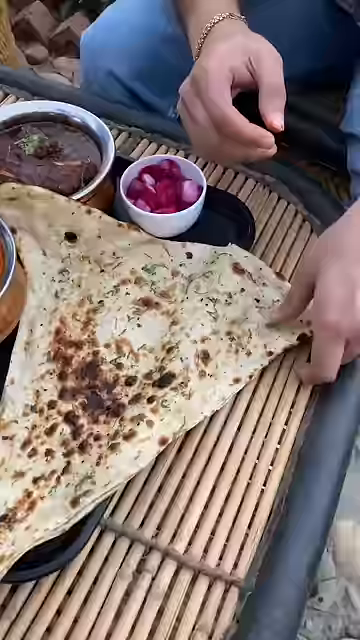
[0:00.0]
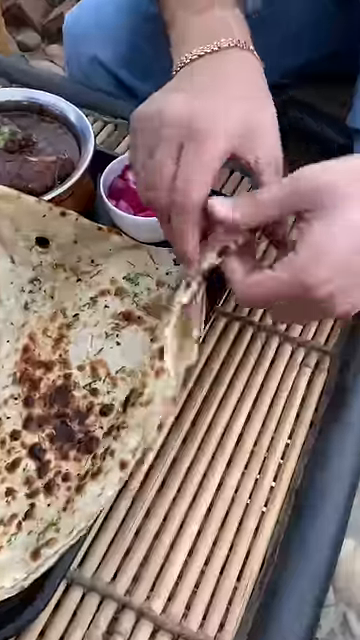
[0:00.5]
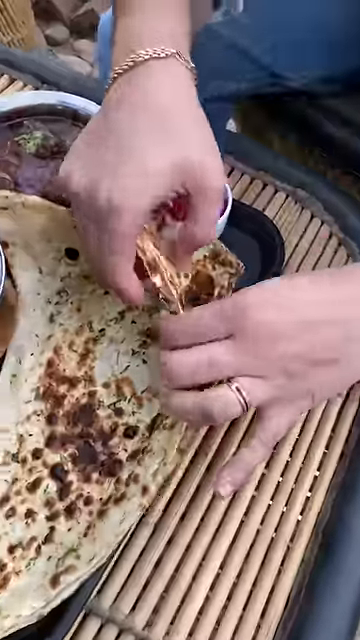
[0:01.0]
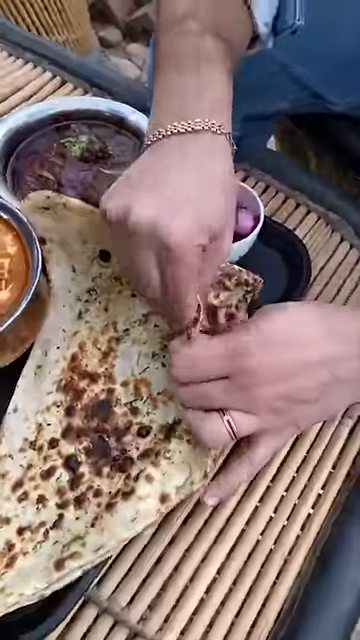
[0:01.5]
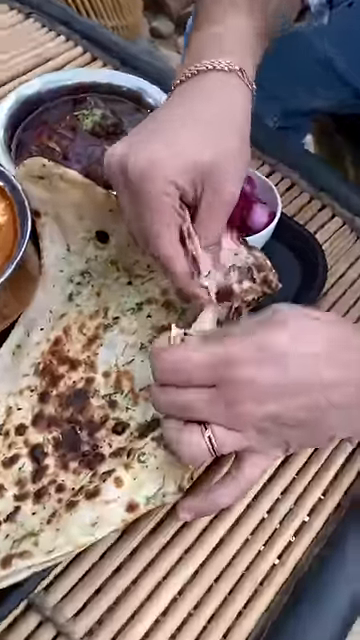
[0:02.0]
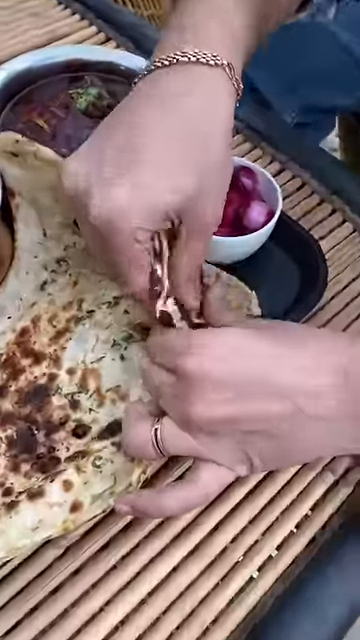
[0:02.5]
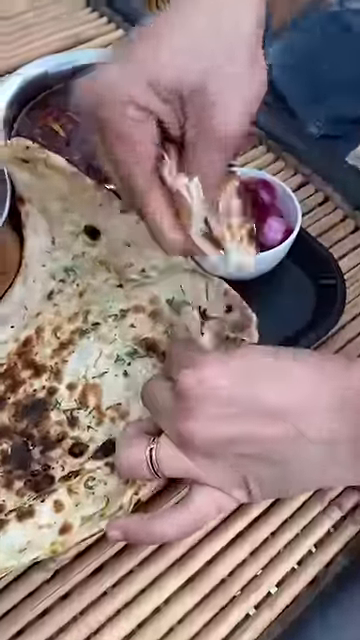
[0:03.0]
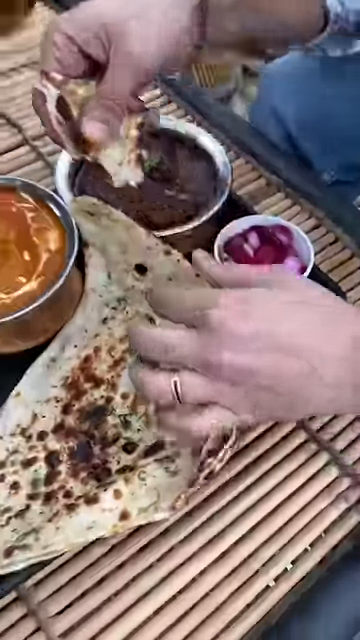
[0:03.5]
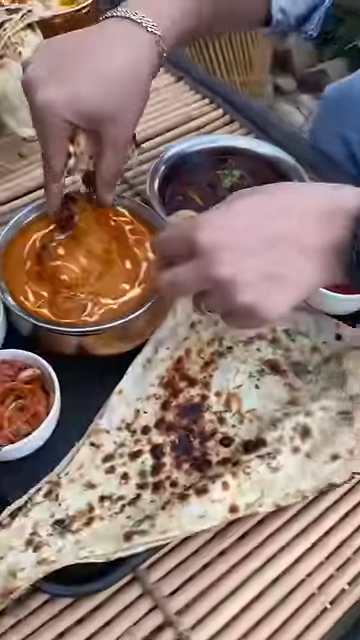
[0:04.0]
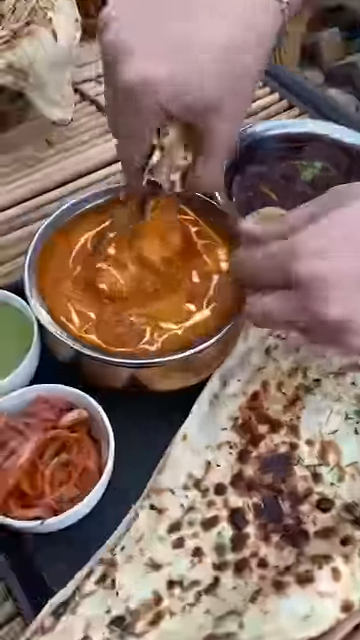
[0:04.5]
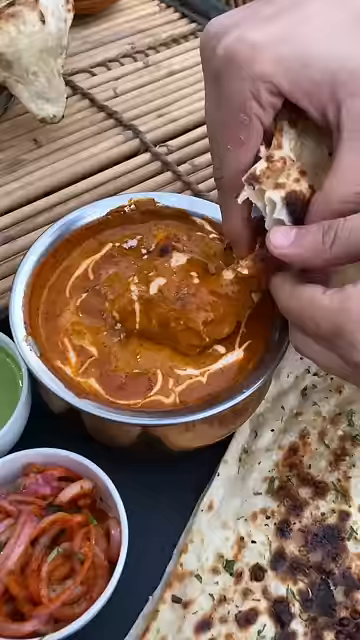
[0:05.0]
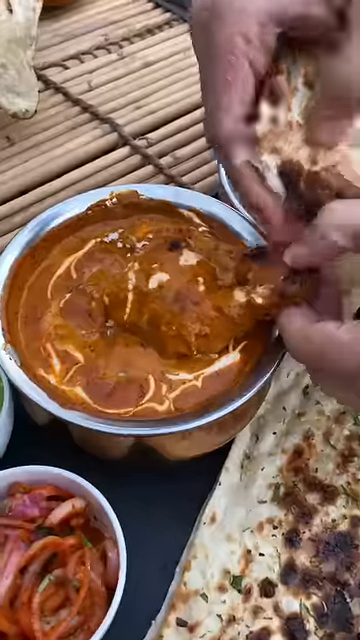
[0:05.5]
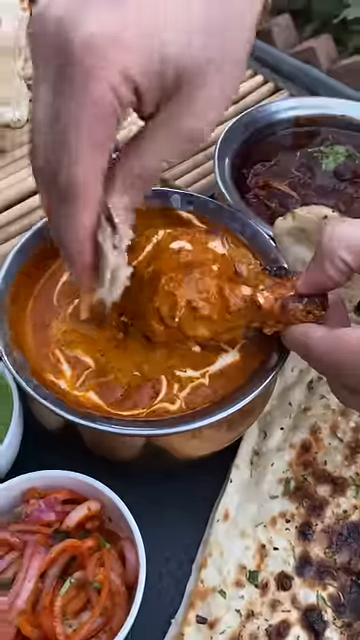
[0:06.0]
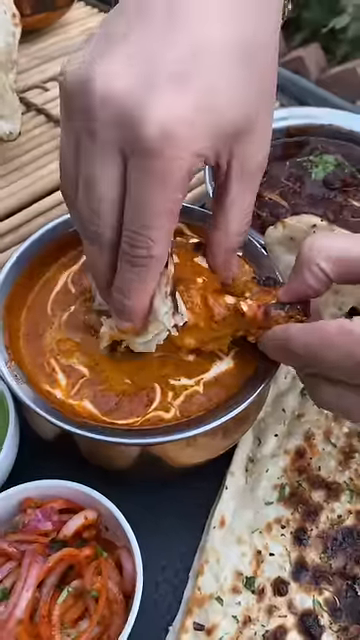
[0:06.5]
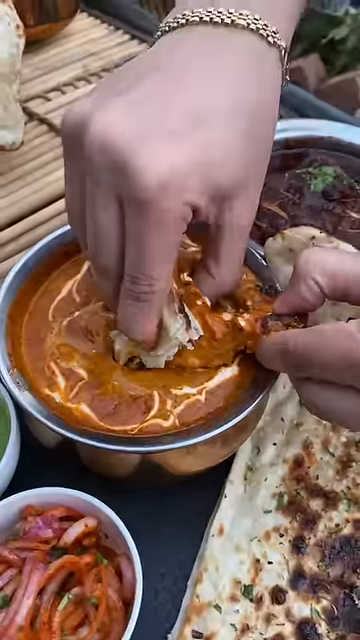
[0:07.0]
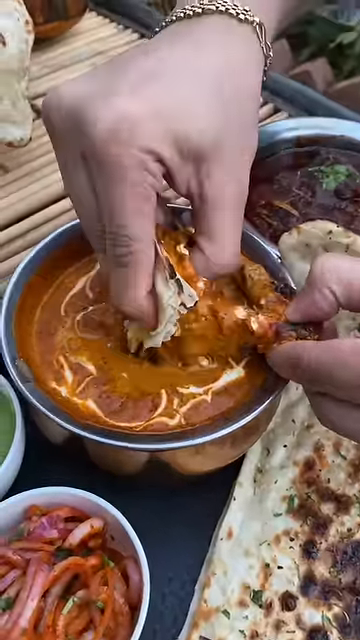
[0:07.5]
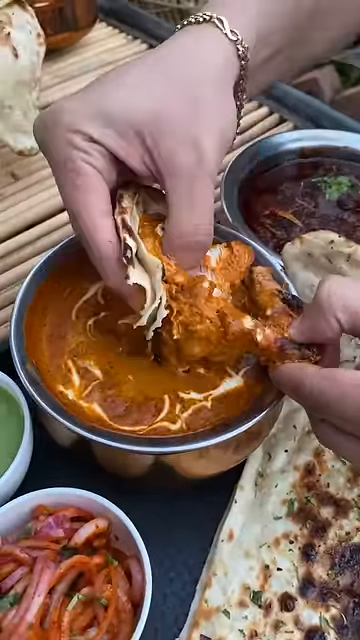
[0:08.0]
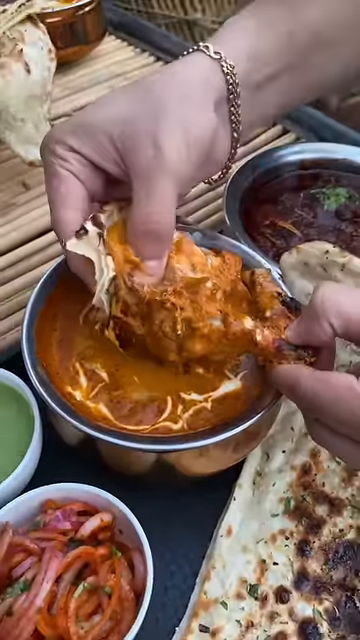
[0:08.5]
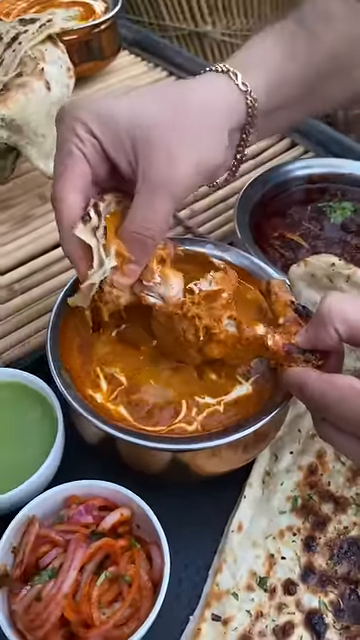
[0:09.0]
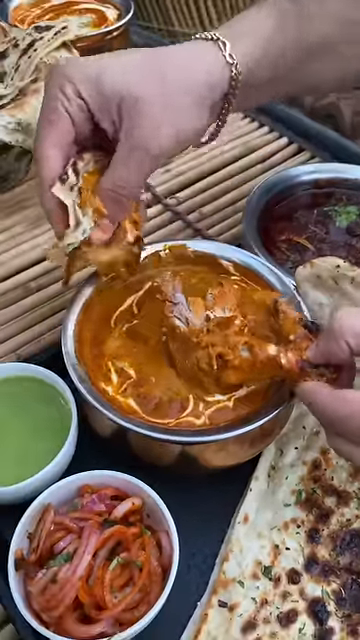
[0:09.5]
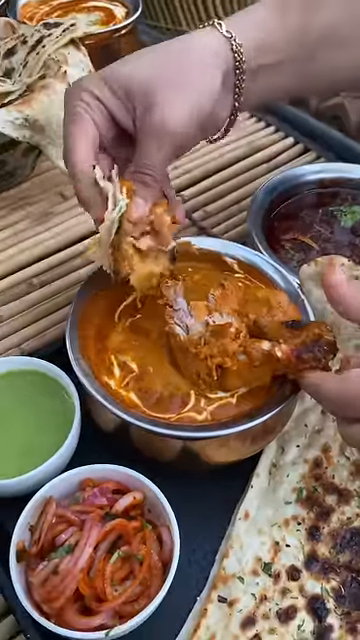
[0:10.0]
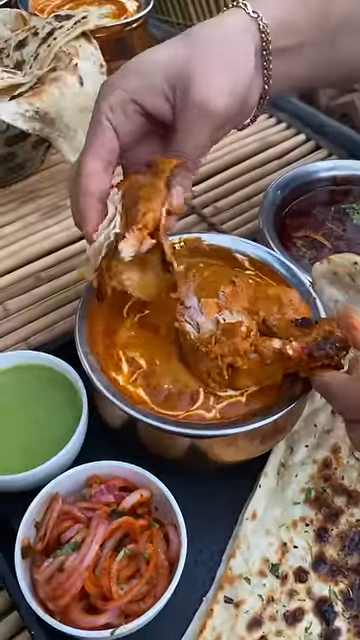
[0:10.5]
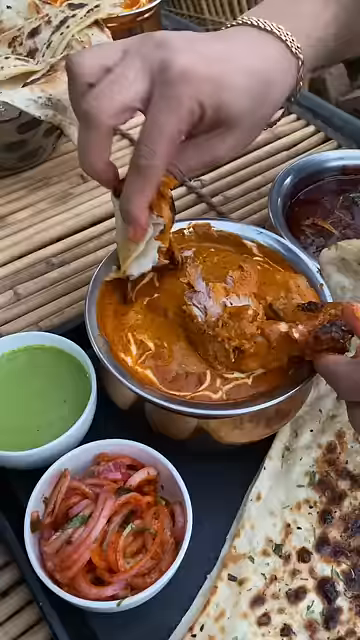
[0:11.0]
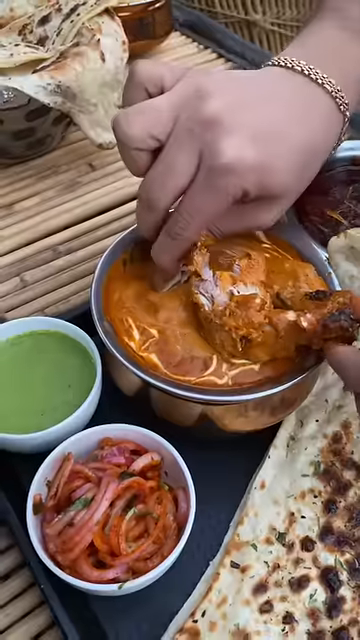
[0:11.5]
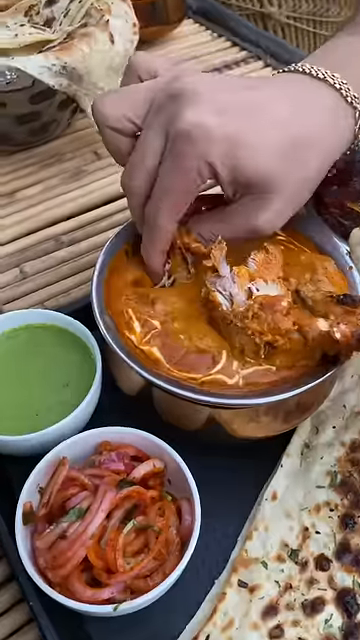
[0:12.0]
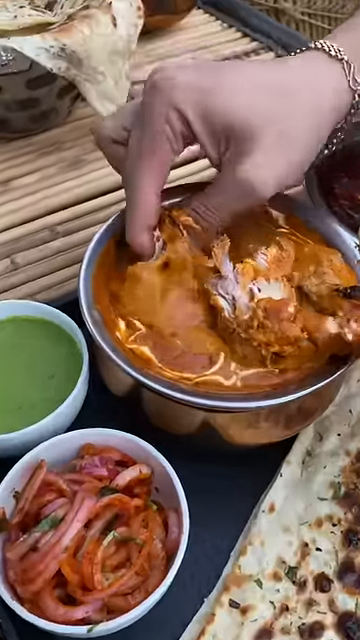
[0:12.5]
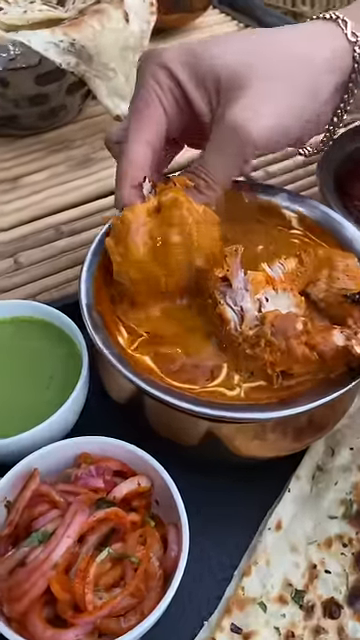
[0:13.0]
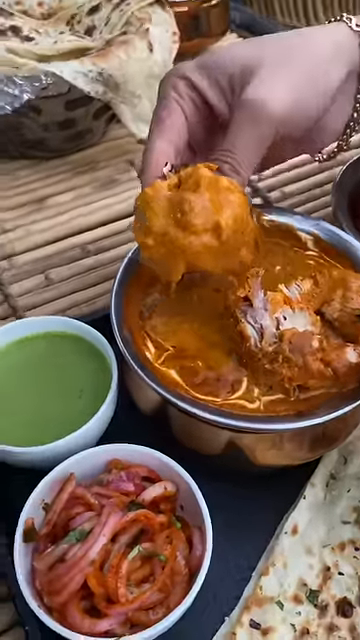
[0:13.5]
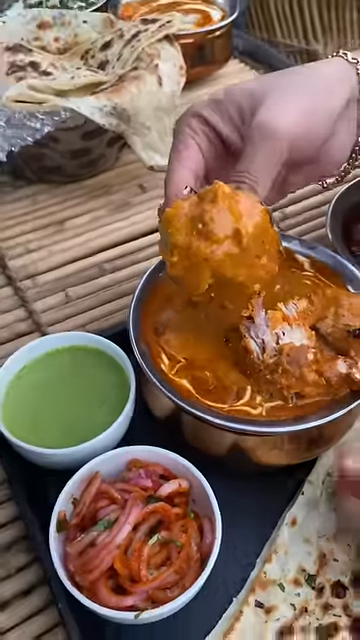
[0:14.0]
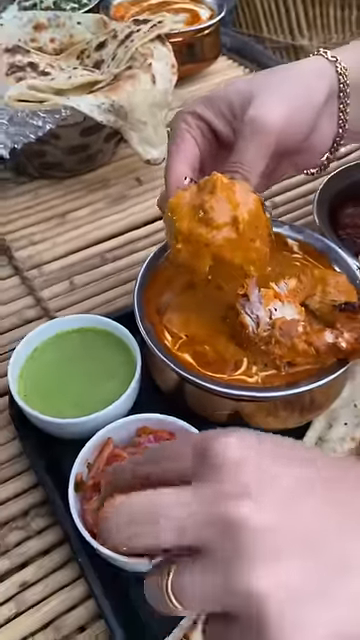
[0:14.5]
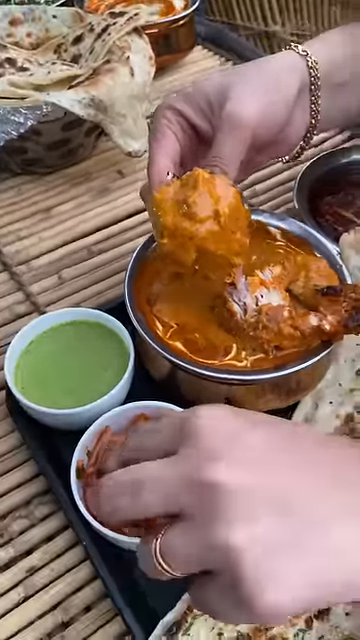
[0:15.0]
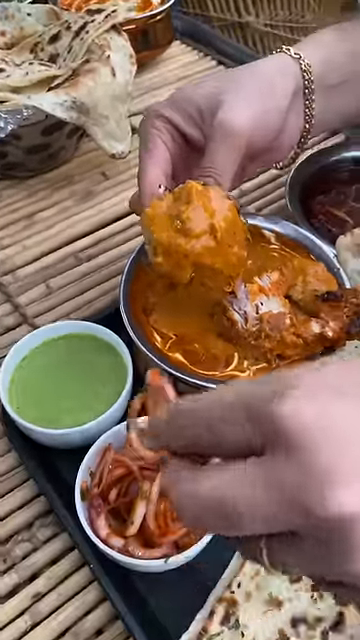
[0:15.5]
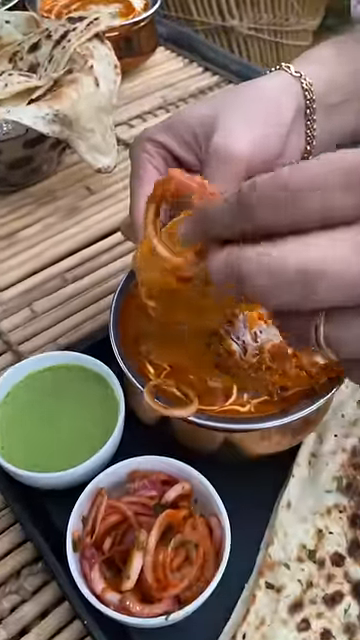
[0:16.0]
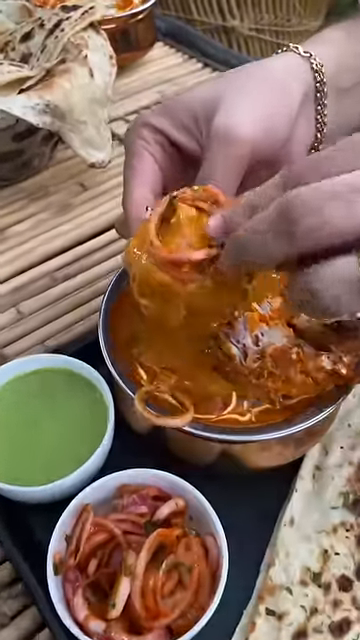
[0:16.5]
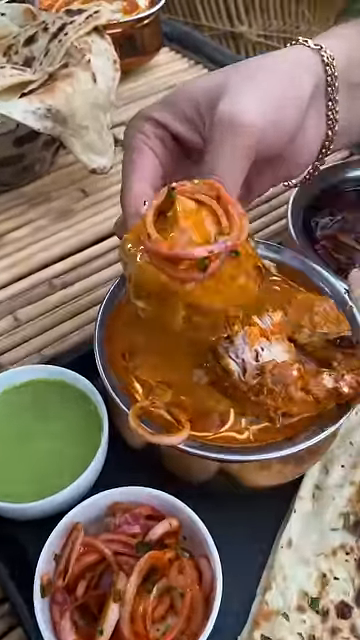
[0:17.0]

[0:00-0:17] A person rips apart some naan that is on top of a black tray. After removing the naan, they pull apart butter chicken and put the chicken on top of the naan, fold it, and dip it into the butter chicken sauce. They then add what appear to be some vinegared onions and eat the food. Next to the naan are other foods as well, including a bowl of shallots, a bowl of what seems to be a brown curry, and a green pureed sauce, or perhaps a soup. Next to the tray they originally had, there is a whole bowl of naan just sitting there. The video is taken during the daytime; there is still light, and no lamps are turned on. The person wears jewelry: a bracelet on their wrist and a ring on their ring finger.